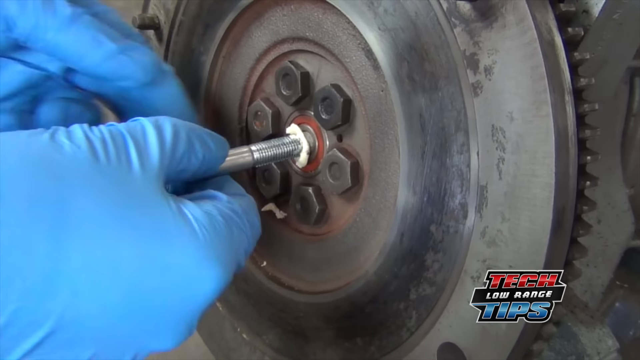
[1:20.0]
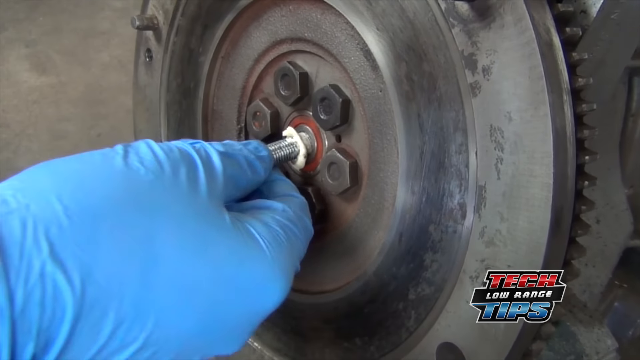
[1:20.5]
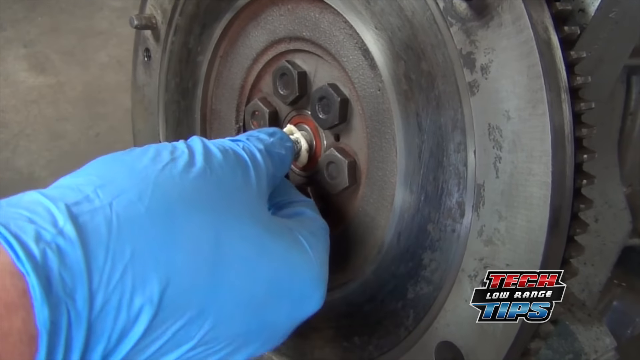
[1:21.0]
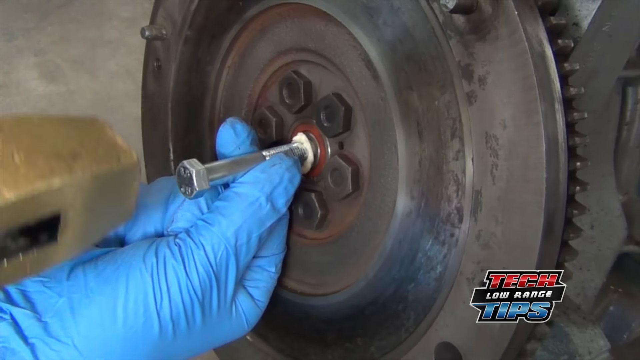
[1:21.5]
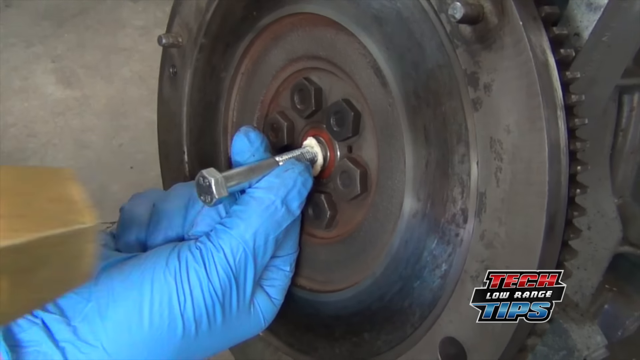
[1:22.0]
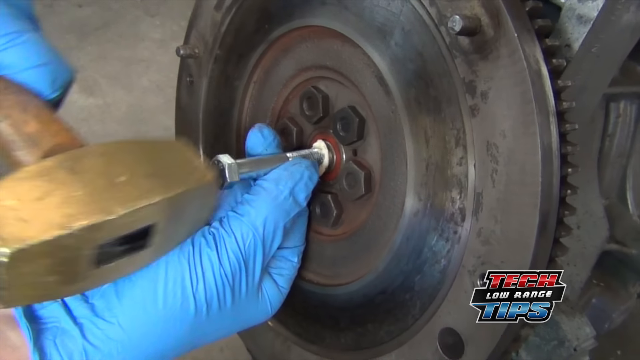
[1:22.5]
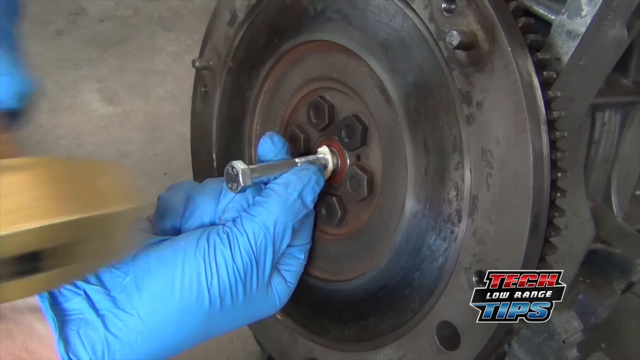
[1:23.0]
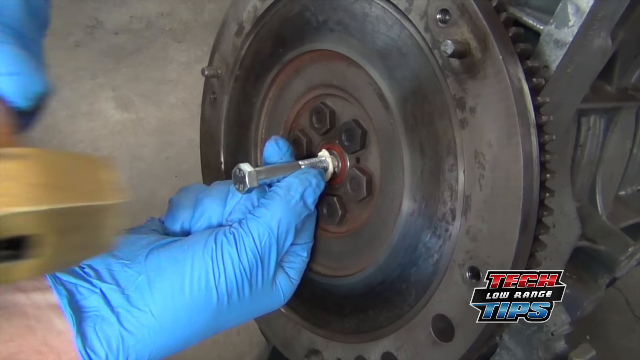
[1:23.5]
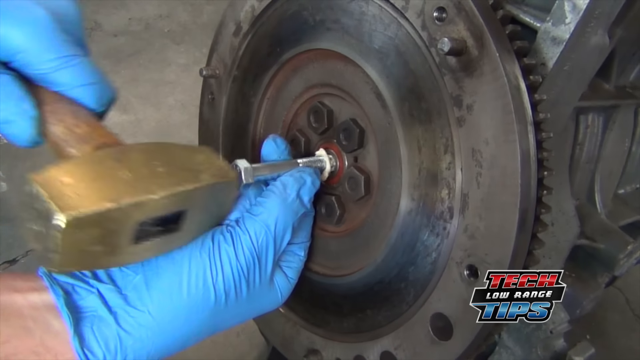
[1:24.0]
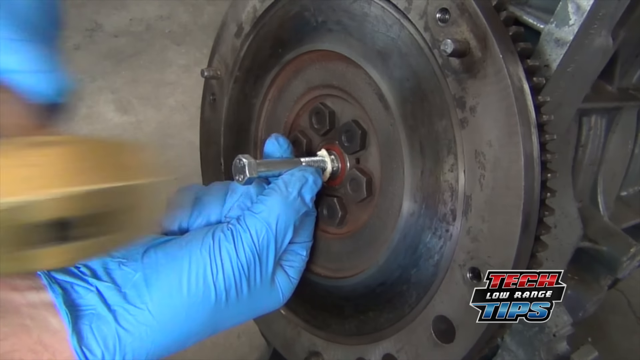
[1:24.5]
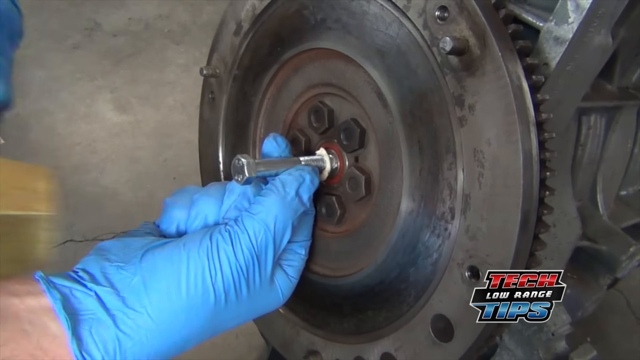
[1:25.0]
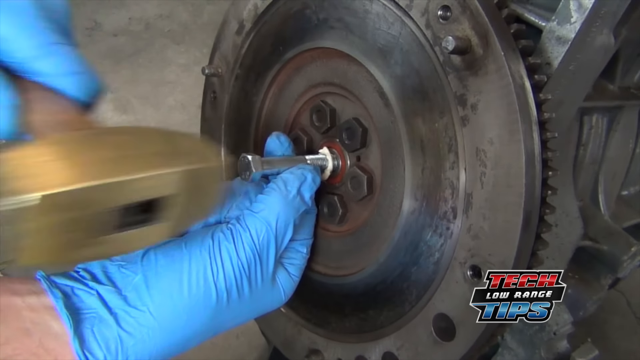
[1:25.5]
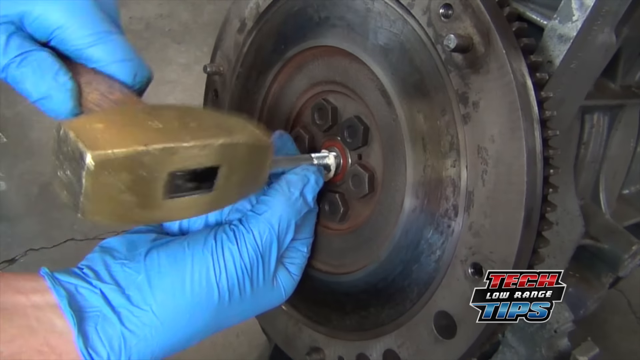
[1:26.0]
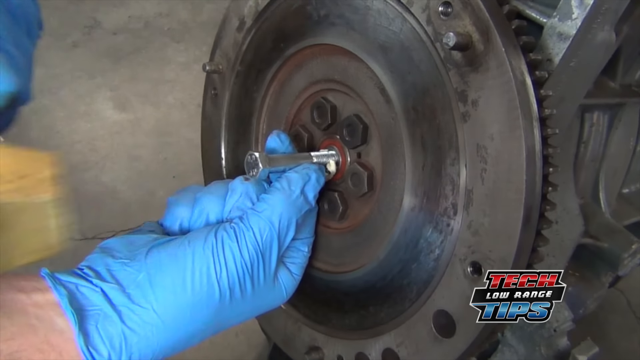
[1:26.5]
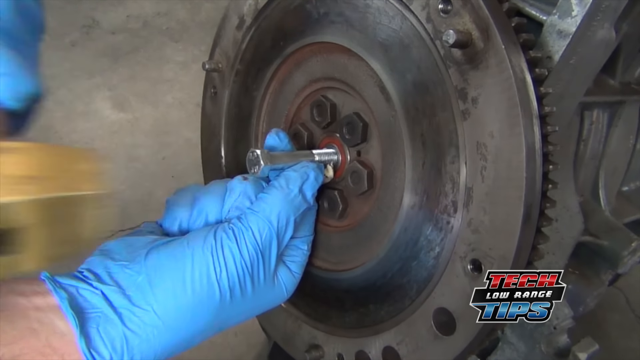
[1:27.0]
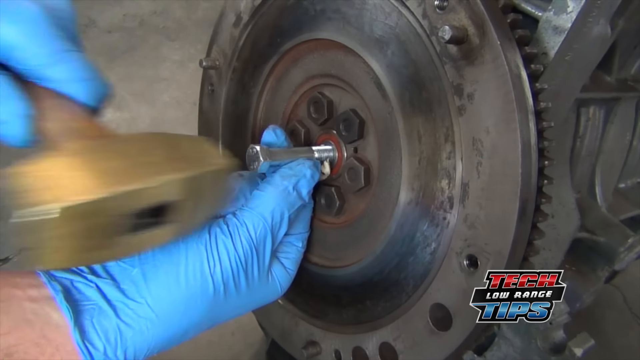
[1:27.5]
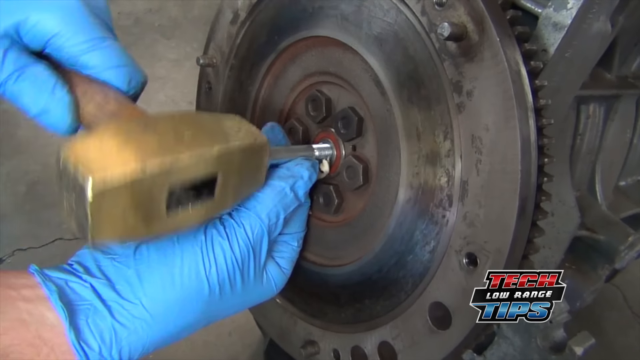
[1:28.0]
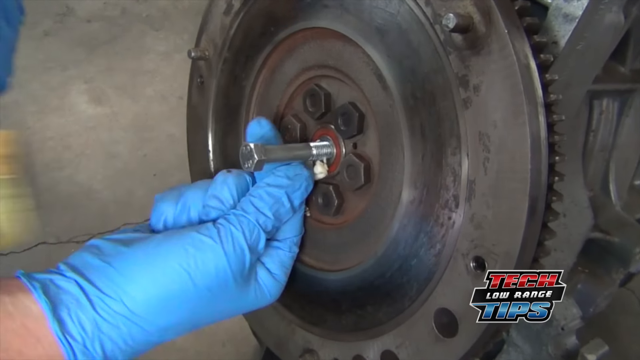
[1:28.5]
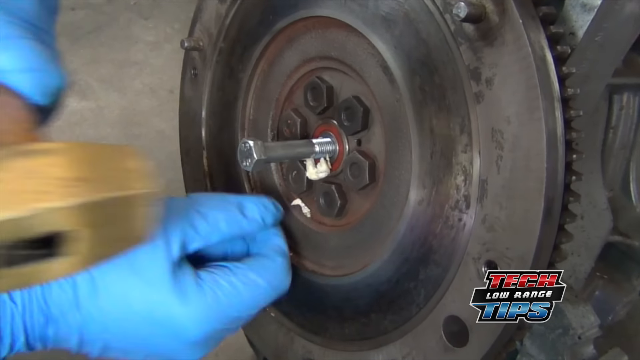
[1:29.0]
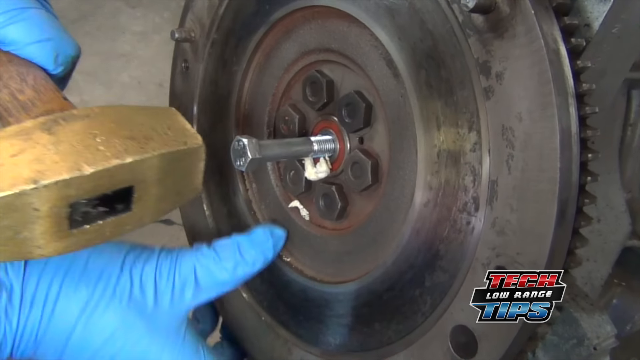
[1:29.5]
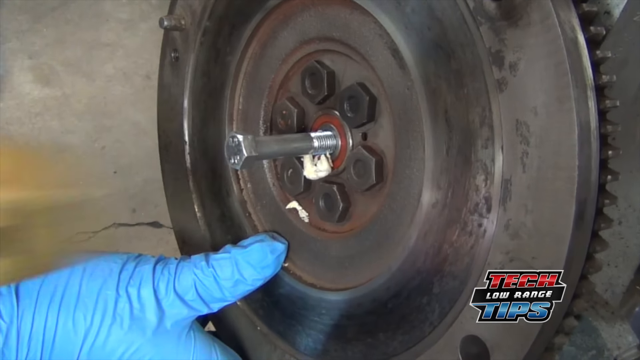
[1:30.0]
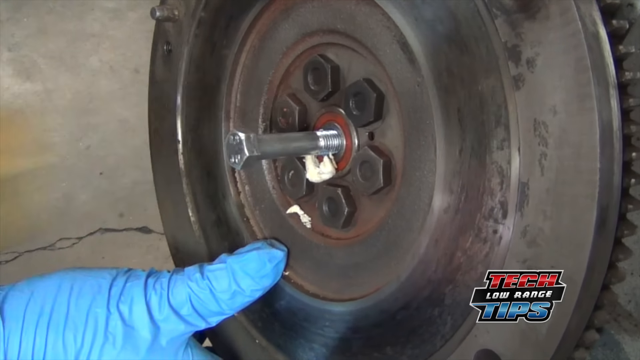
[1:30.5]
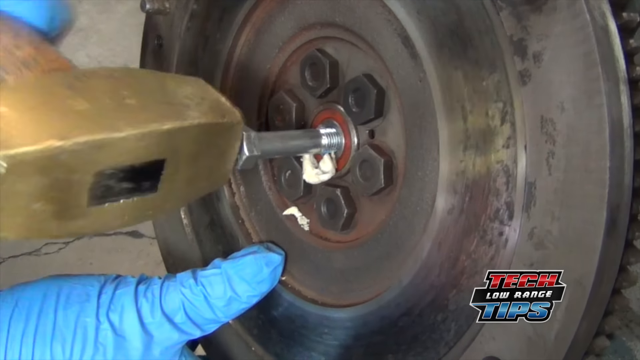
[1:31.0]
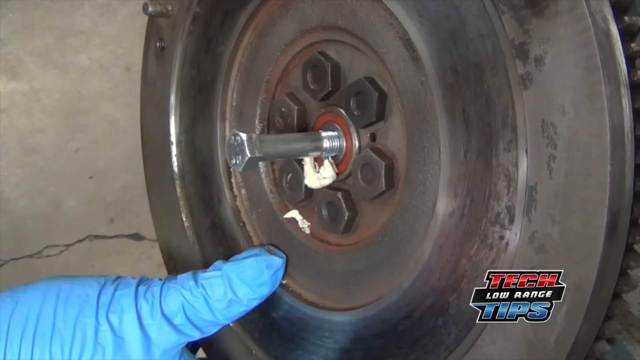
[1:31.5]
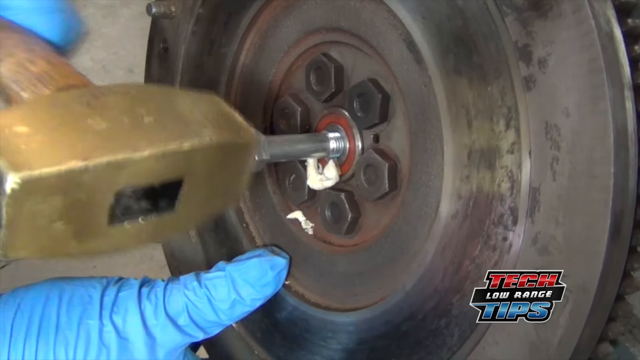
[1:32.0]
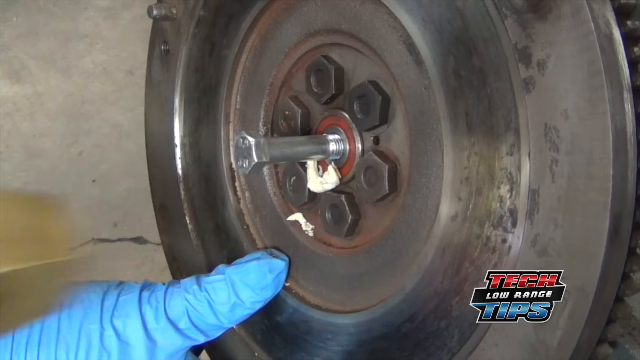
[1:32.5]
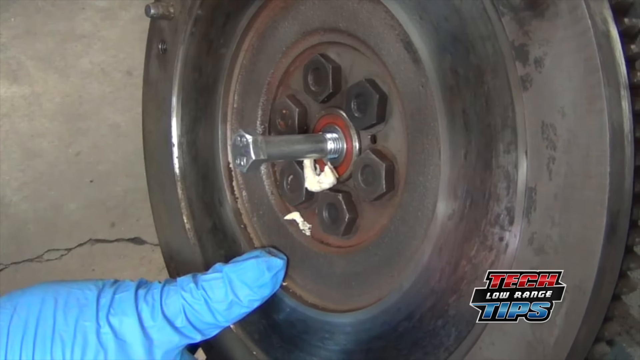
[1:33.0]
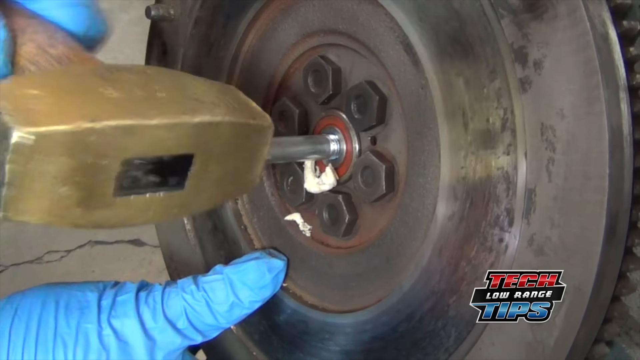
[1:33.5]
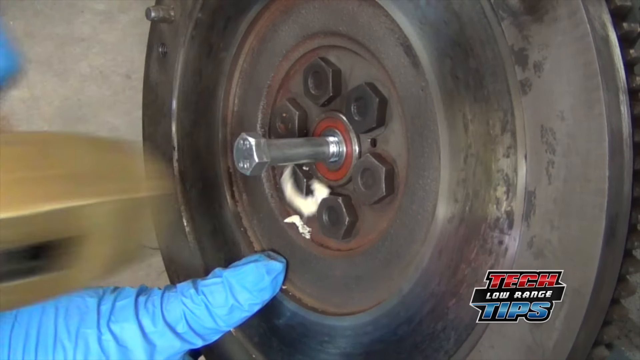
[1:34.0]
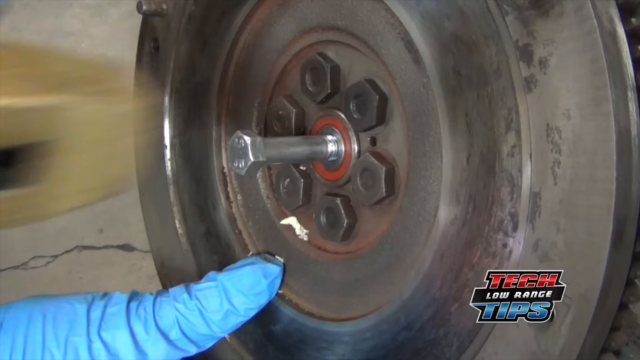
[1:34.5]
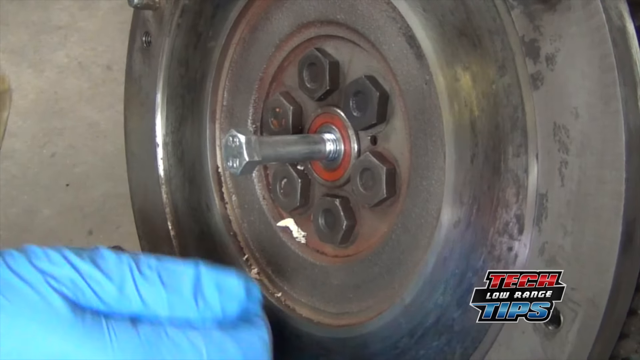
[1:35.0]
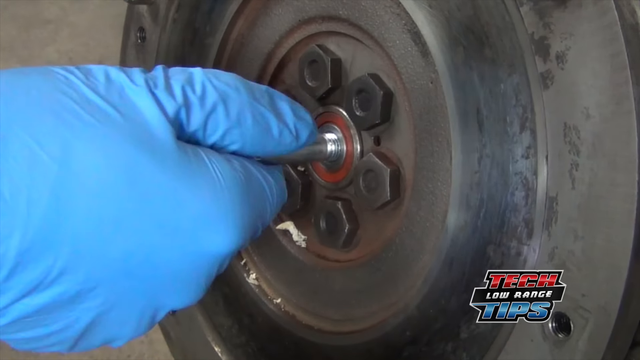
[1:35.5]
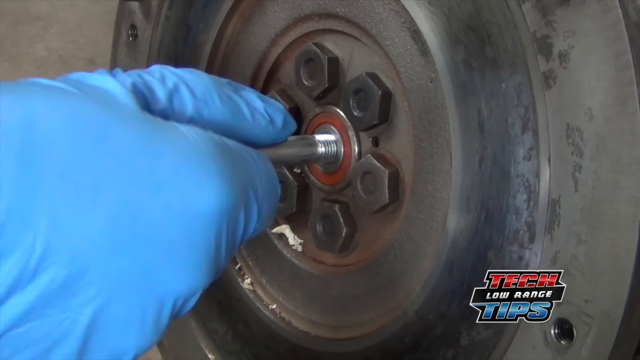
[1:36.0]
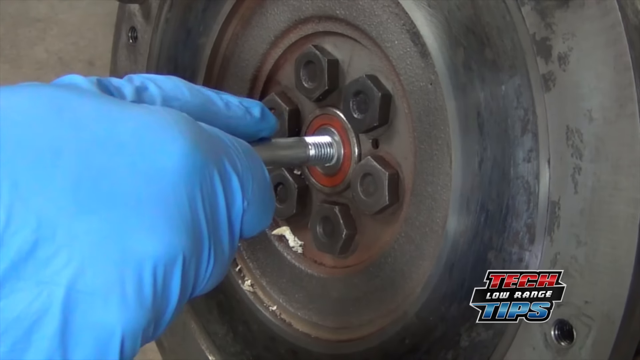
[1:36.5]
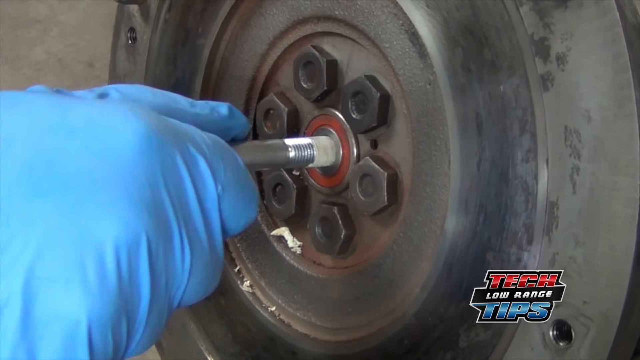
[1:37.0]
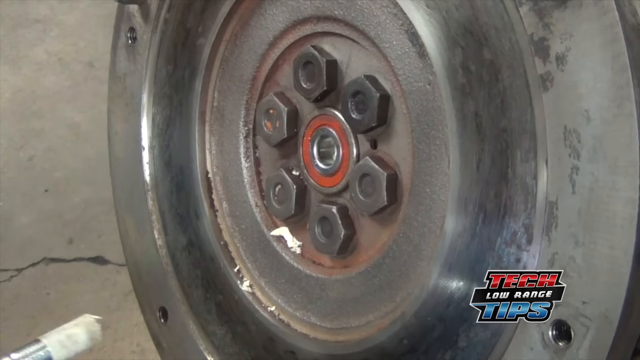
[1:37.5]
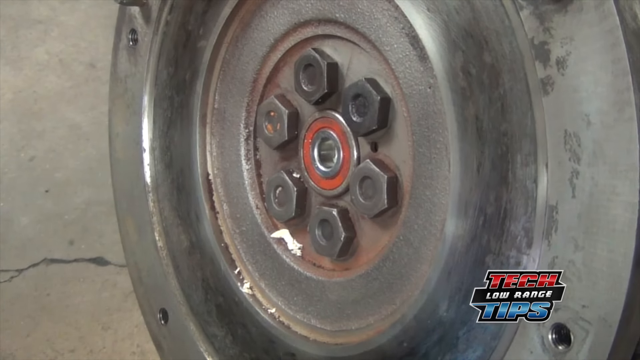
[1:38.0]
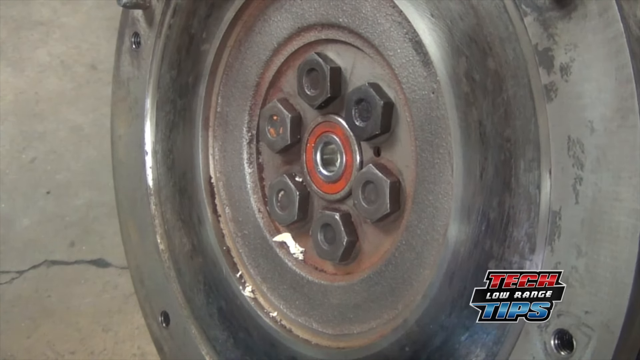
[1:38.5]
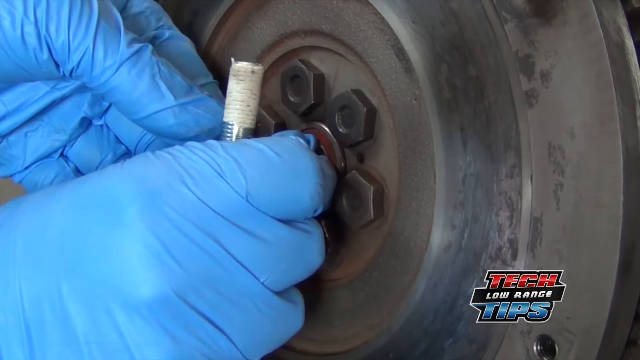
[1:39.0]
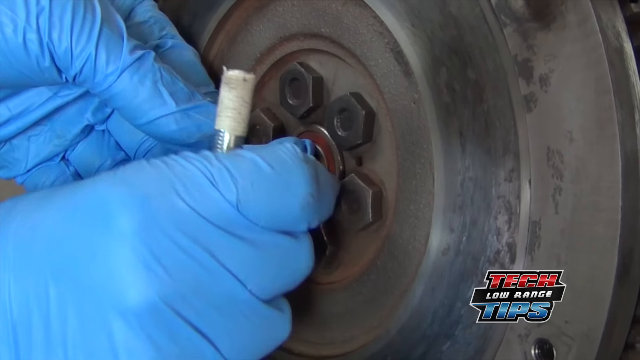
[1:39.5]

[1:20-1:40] The text "tech low range tips" appears. A person wearing blue gloves tries to put a little tool into a hole in a circular object; they apparently put bread in the hole and press it in with a little screw. They put the screw in and hammer it with a hammer, apparently to press the bread in, and the screw slowly goes in. They then pull the screw out and pull the bread out, and afterwards press more of what is apparently bread into the hole.